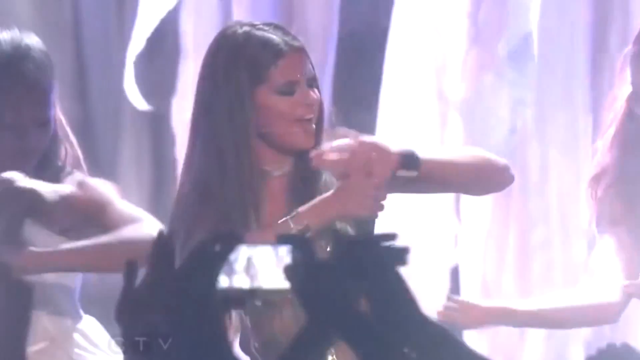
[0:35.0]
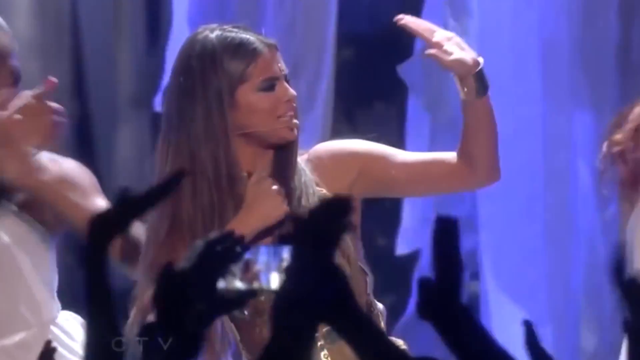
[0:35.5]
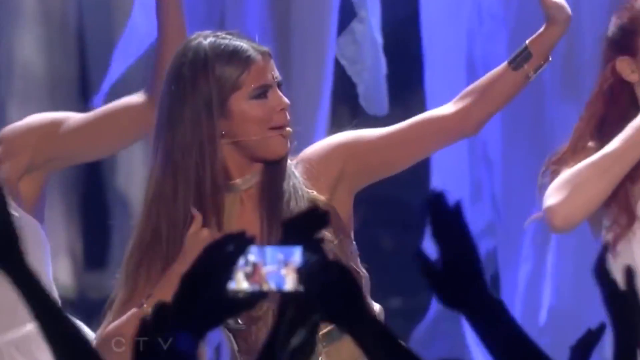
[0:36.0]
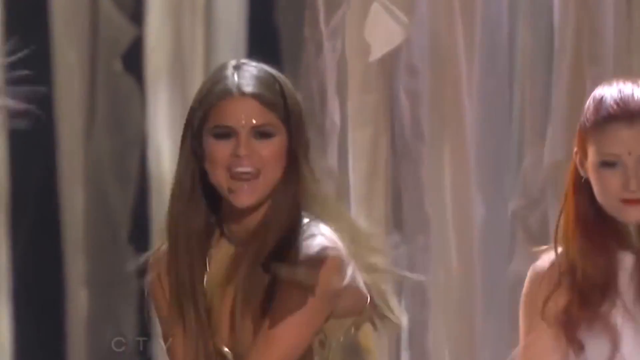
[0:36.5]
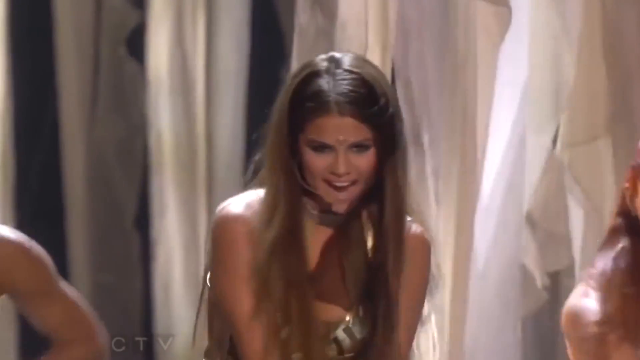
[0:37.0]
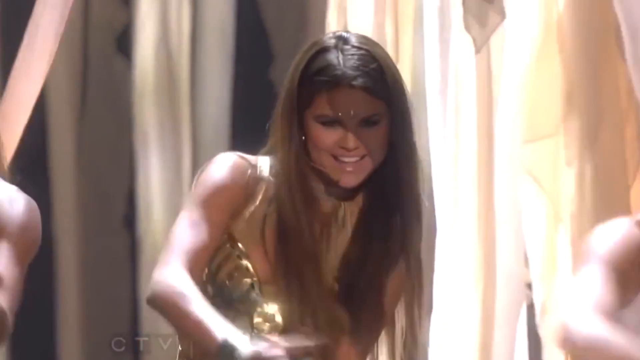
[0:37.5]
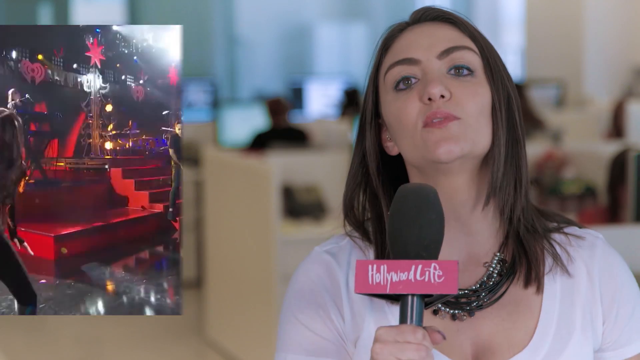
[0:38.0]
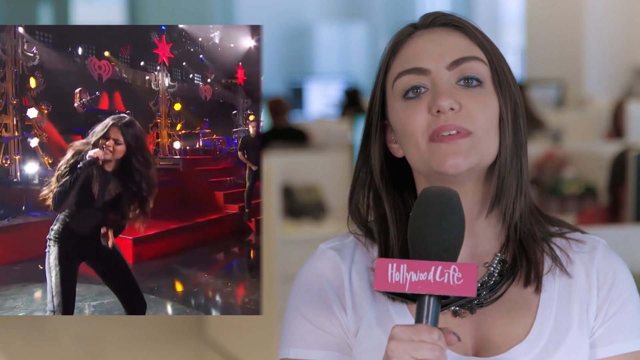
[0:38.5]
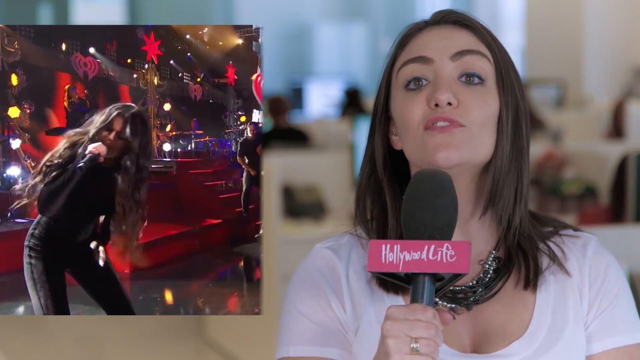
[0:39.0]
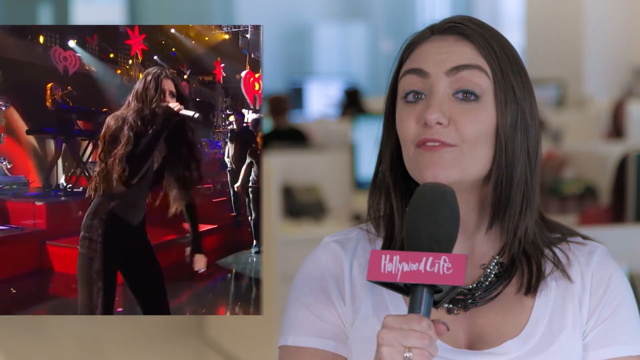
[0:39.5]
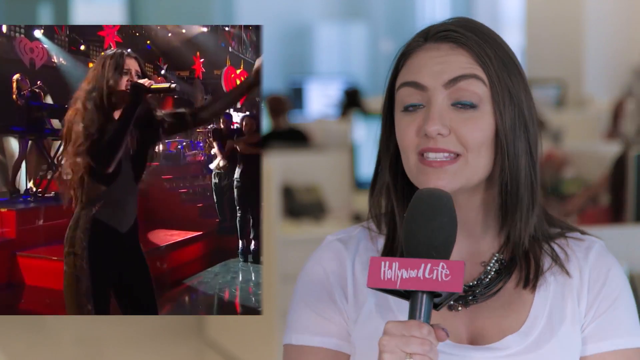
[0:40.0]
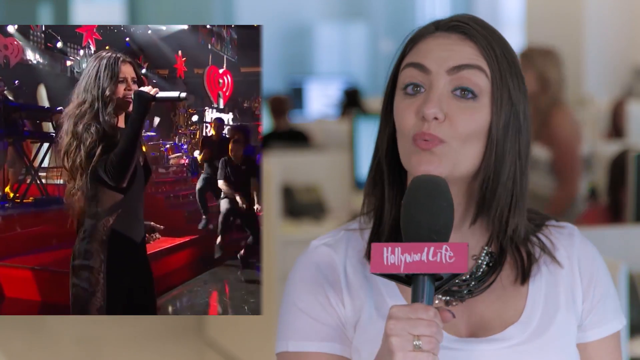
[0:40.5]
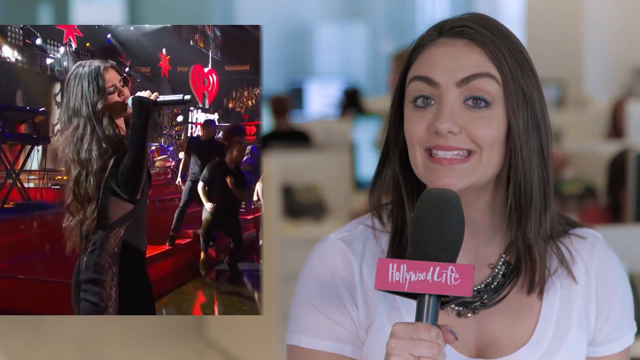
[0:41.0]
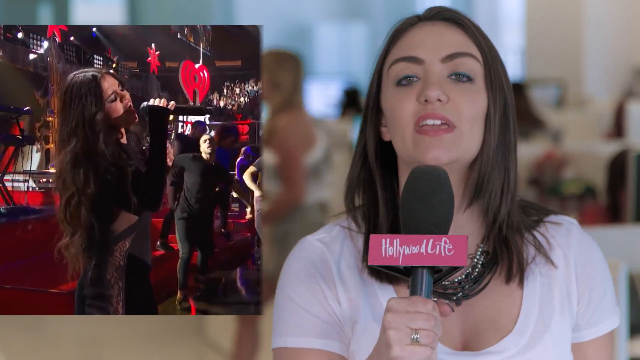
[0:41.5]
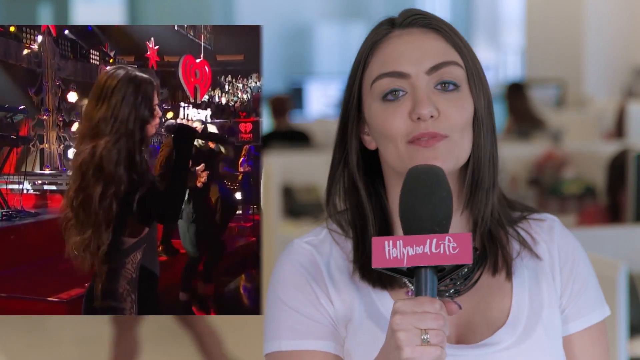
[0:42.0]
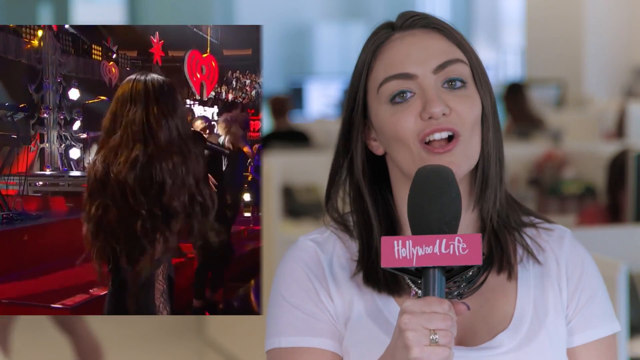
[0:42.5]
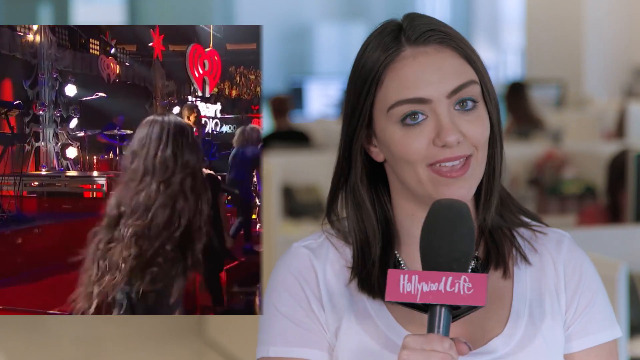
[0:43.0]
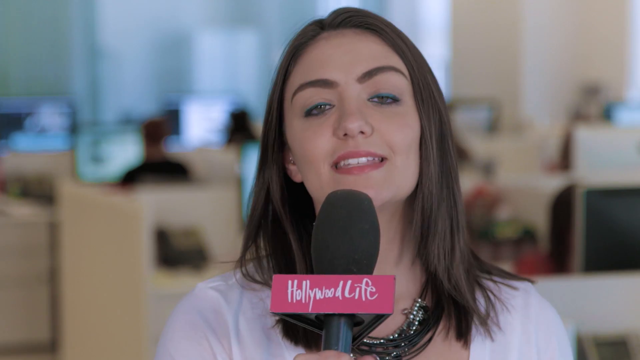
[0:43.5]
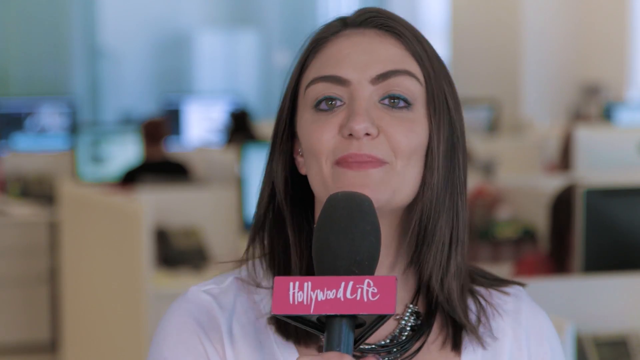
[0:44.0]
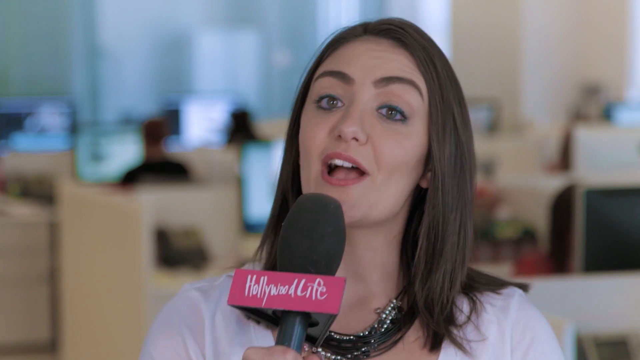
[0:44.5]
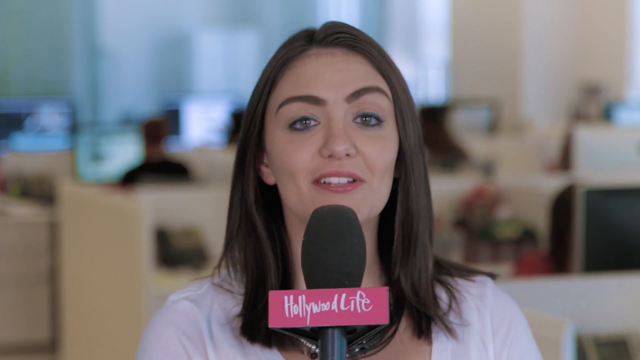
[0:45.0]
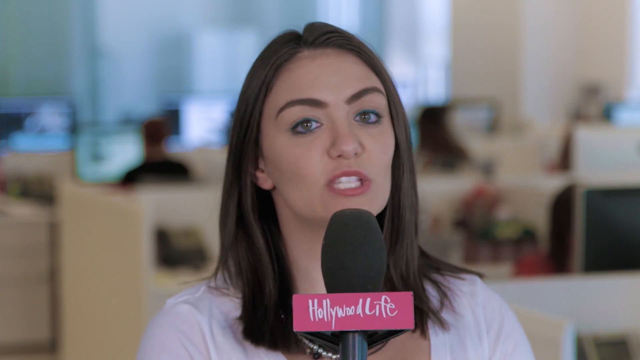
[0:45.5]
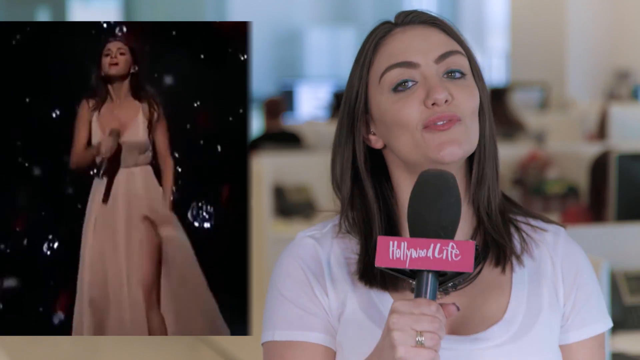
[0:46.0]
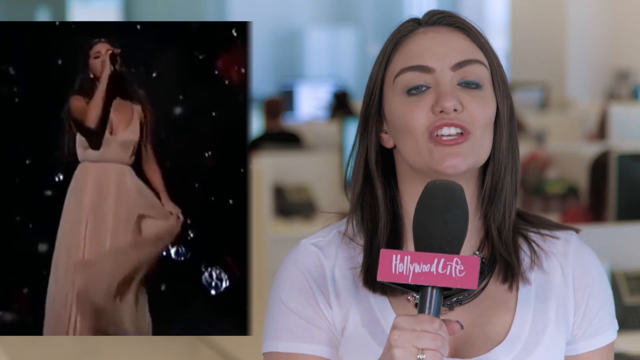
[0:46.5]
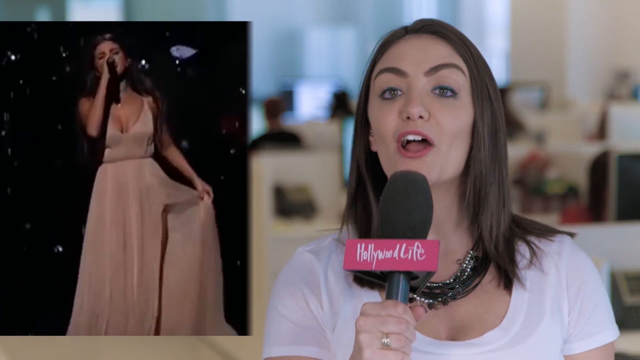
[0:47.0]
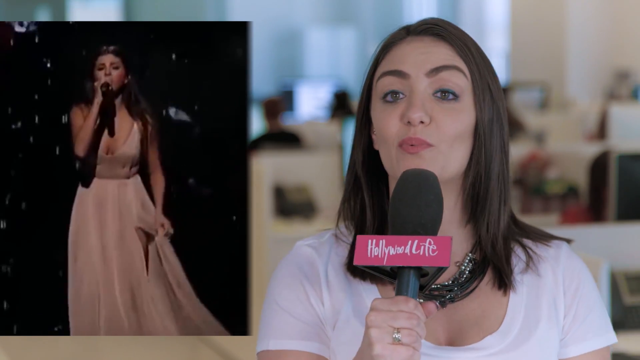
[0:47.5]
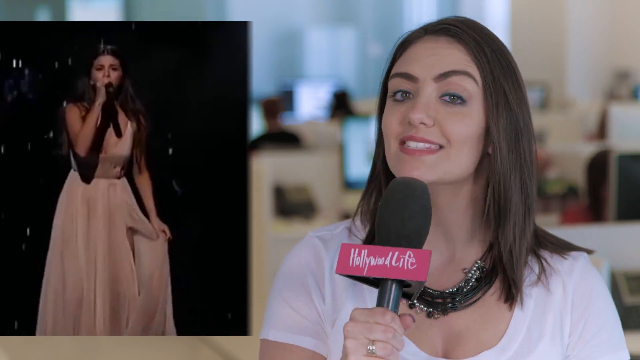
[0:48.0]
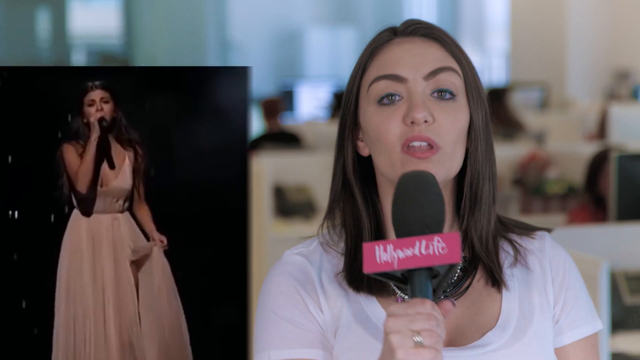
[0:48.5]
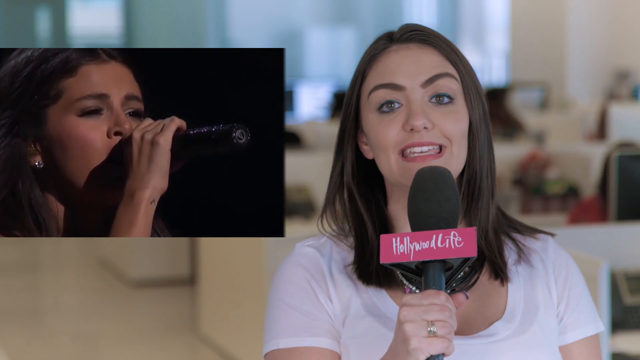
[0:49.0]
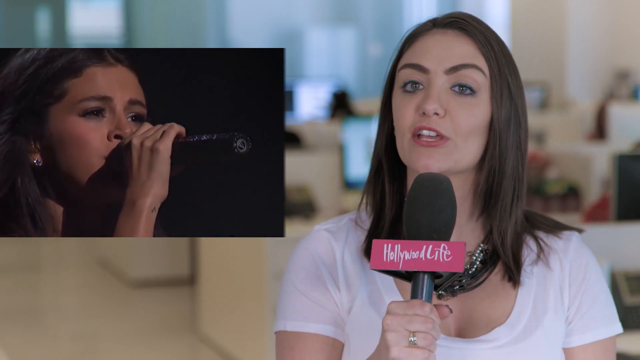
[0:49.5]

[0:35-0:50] The reporter speaks to the camera with her microphone while superimposed videos come and go to her right, showing Selena Gomez in different music videos or live stage appearances. No text appears on screen. The reporter has long brown hair past her shoulders, lots of makeup and very bright pink lipstick matching the pink Hollywood Life microphone, and she appears to wear about eight or nine necklaces layered one over the other. She is young, maybe in her late 20s or early 30s. Behind her is a blurred shot of an office with desks.